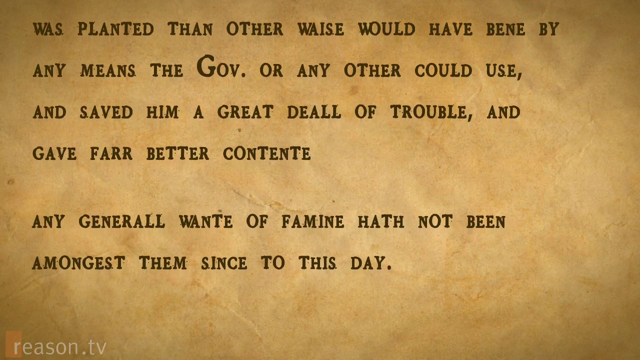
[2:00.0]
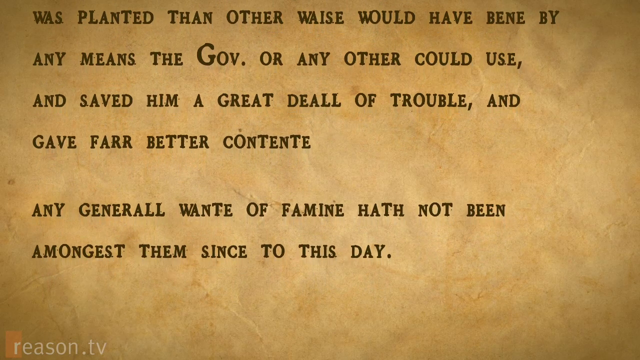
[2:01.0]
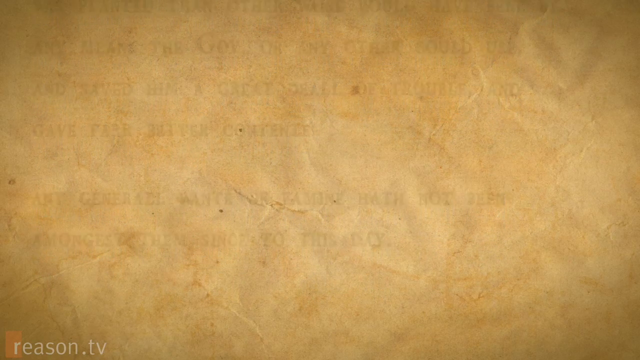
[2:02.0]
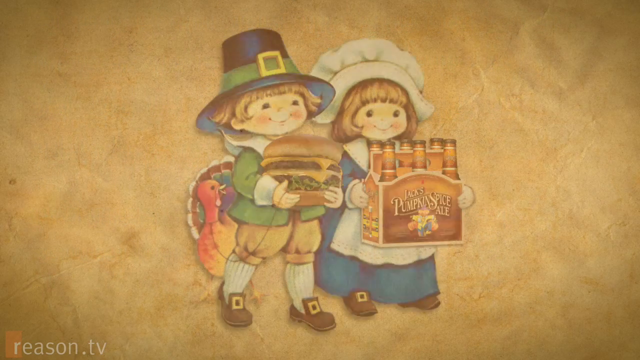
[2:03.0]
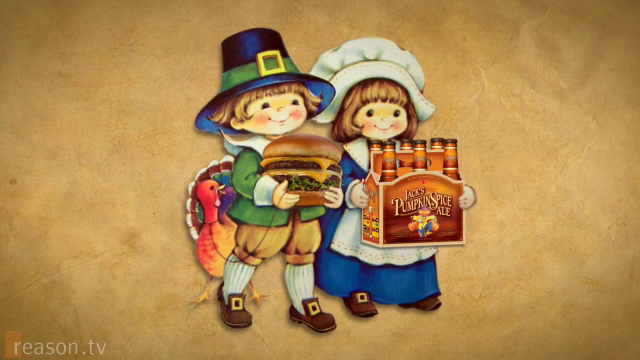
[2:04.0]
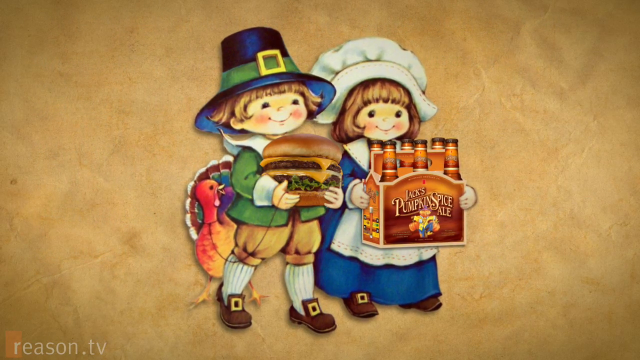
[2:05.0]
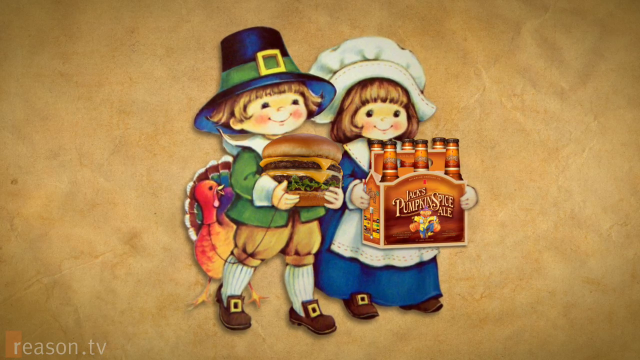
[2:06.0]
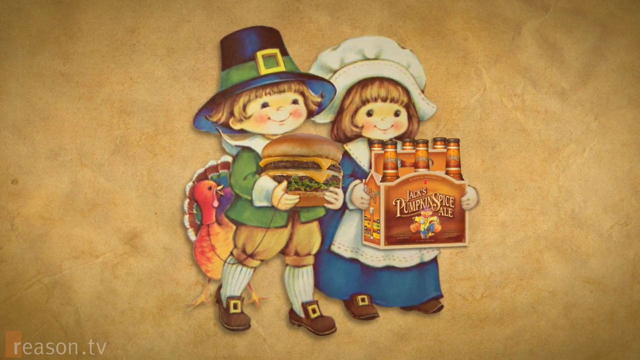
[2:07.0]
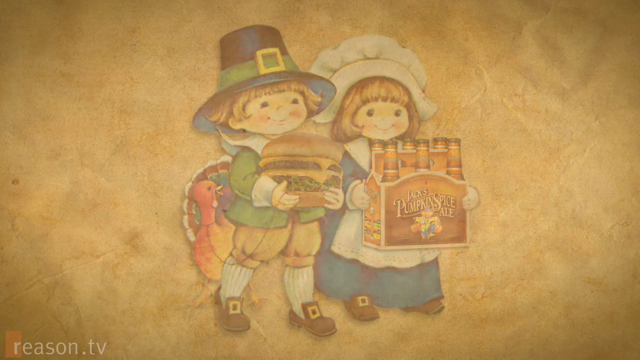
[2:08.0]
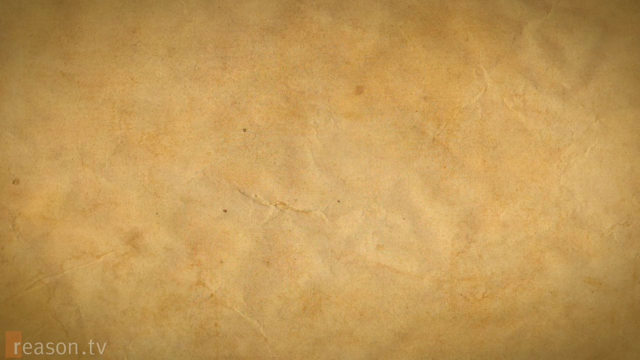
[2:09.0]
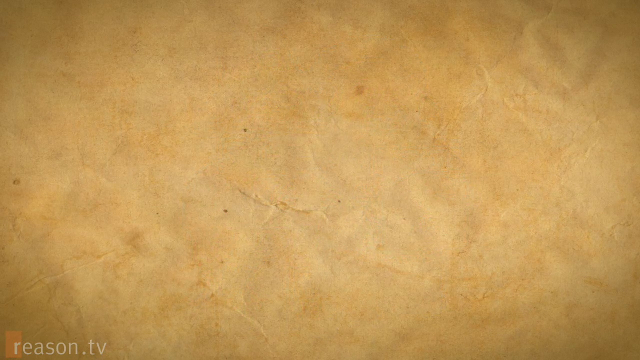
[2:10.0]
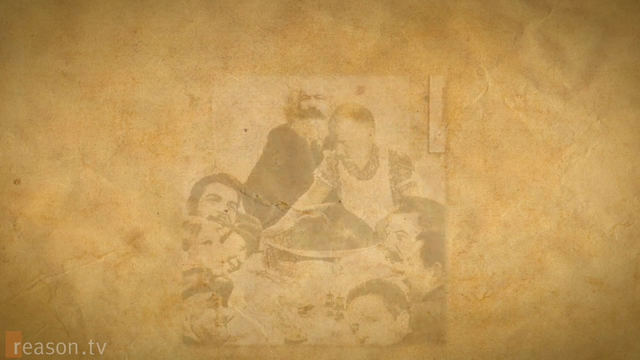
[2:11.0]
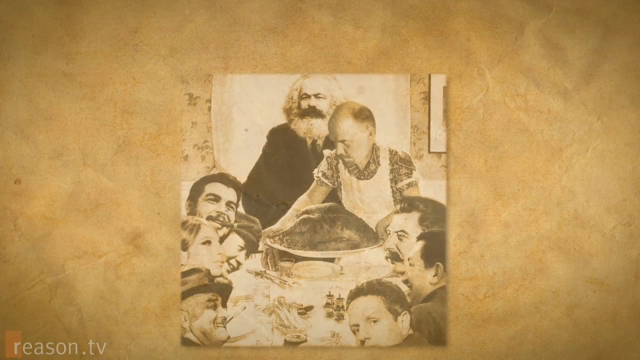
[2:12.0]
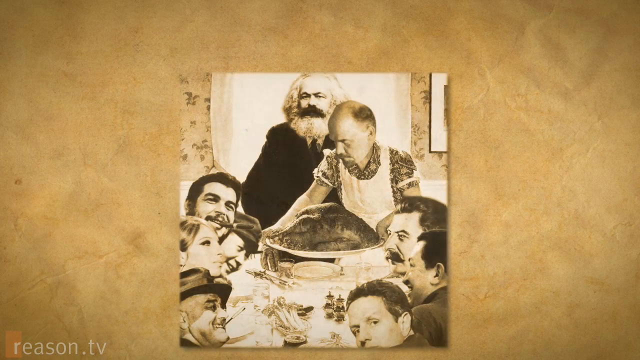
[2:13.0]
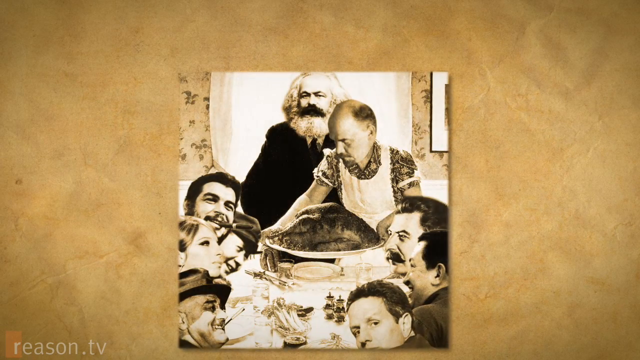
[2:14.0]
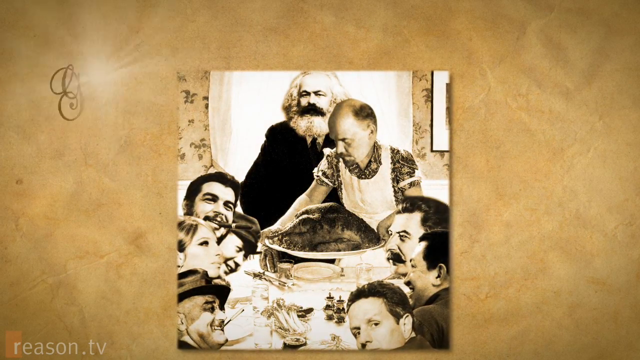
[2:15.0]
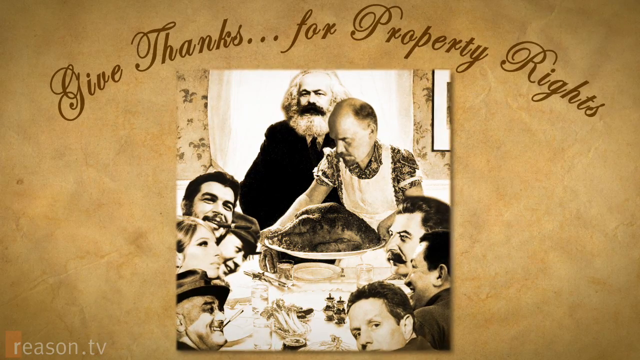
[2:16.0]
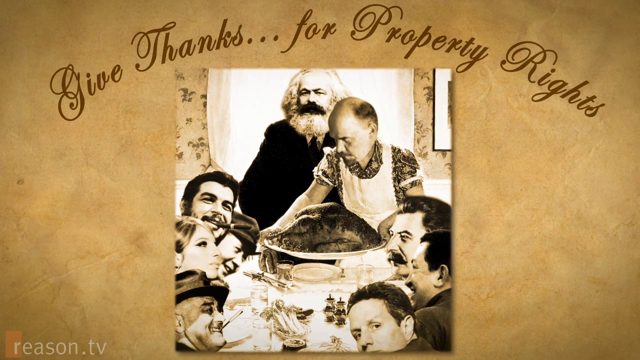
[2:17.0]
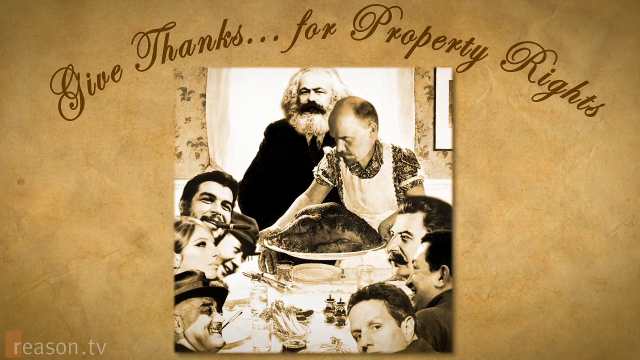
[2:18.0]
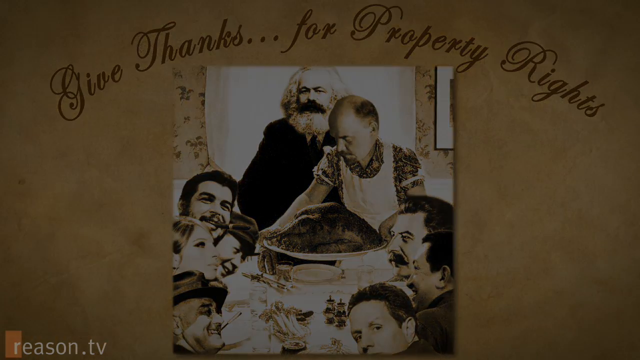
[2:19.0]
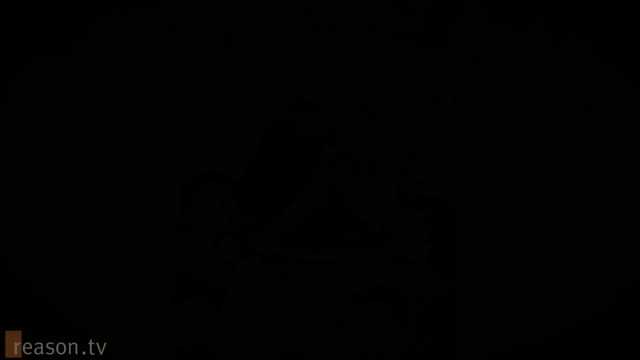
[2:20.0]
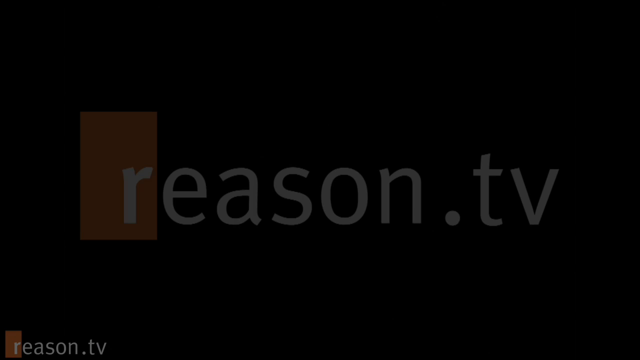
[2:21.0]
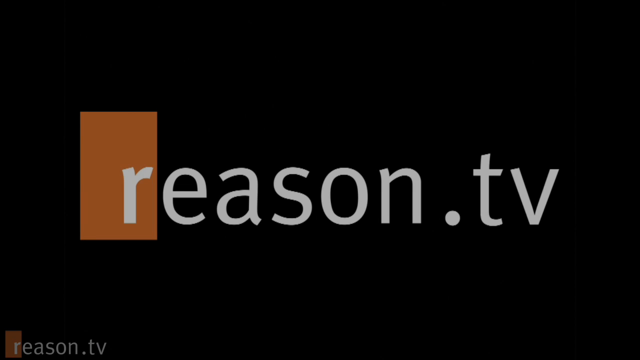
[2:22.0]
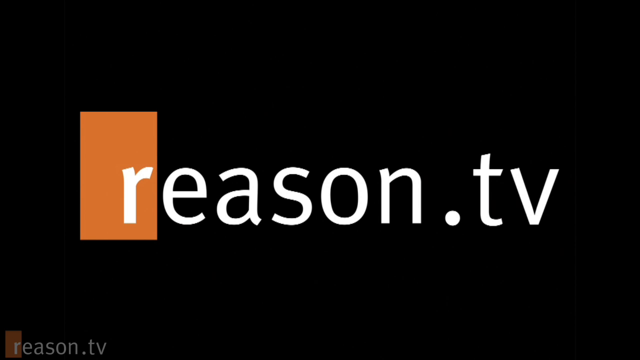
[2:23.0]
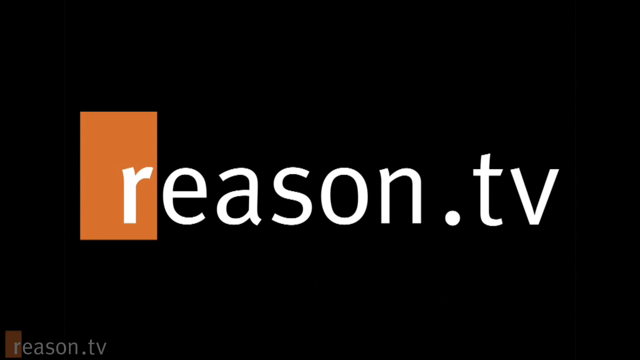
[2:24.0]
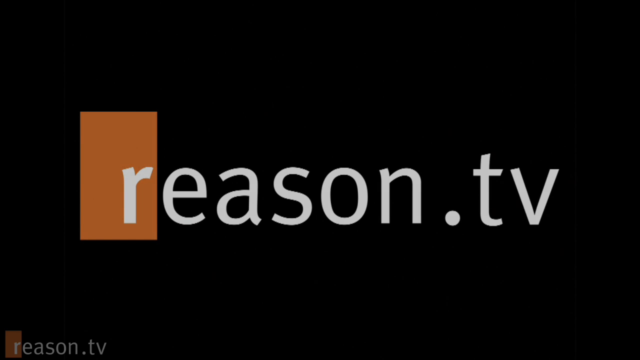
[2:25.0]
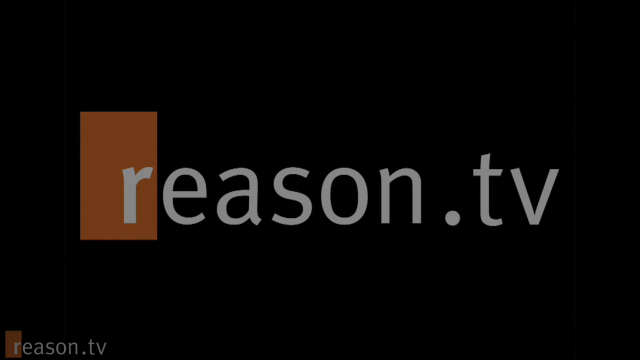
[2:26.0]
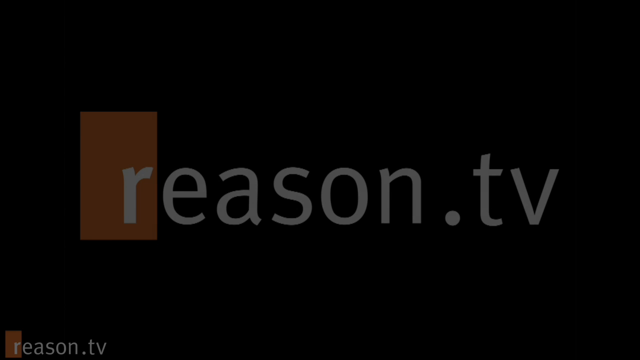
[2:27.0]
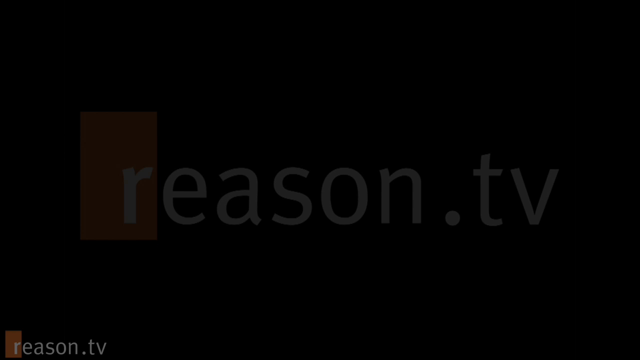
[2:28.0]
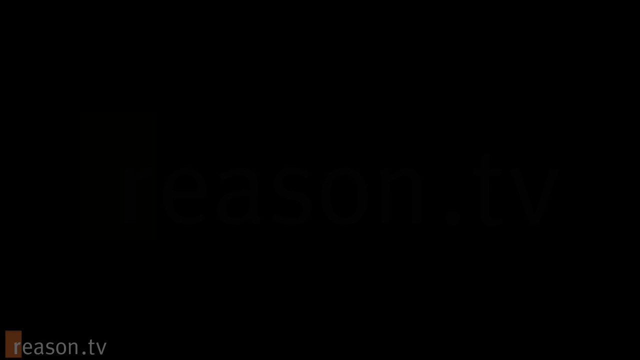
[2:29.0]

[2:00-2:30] Text moves up the screen, reading "was planted than other ways would have been by any means the gov or any other could use and saved him a great deal of trouble and gave far better consent. Any general want of famine has not been amongst them since to this day." The text goes away and two digital images of pilgrim-looking children appear. The girl wears a blue dress with a white hat and holds Jack's pumpkin spice latte and what looks like a six-pack of alcoholic beverages in bottles. The boy wears a green coat, brown shirts, high white socks, old tiny shoes and a black hat, and holds a cheeseburger that looks like it has double patties with cheese, two buns and a piece of lettuce on the bottom. Behind him, partially out of view, is a turkey. Their heads kind of bobble while the rest of them does not move. They go away, and an old-timey picture that looks photoshopped pops up.